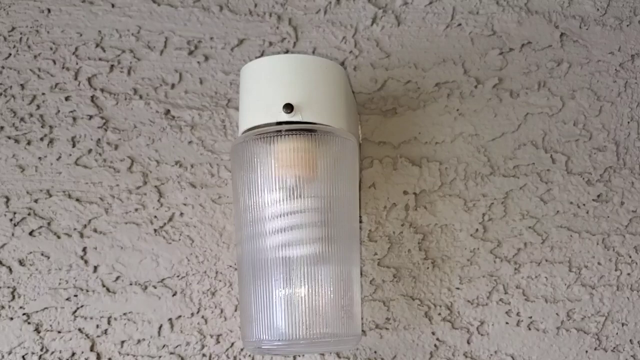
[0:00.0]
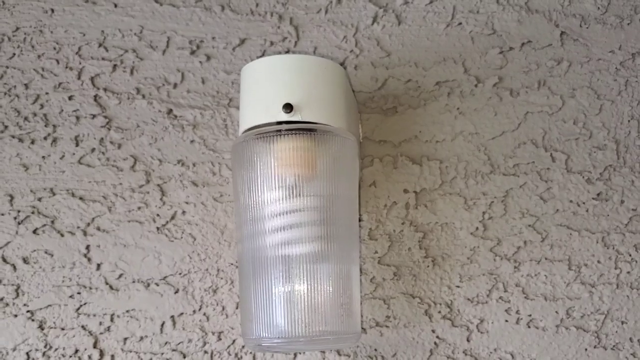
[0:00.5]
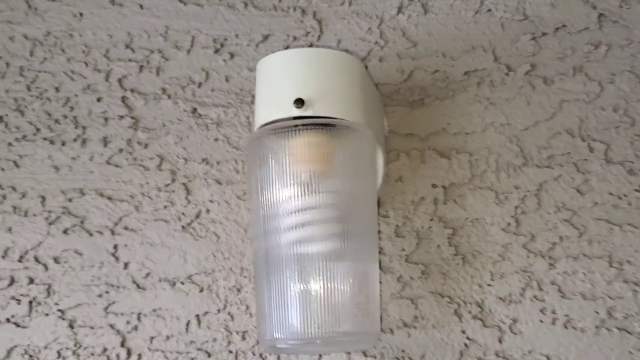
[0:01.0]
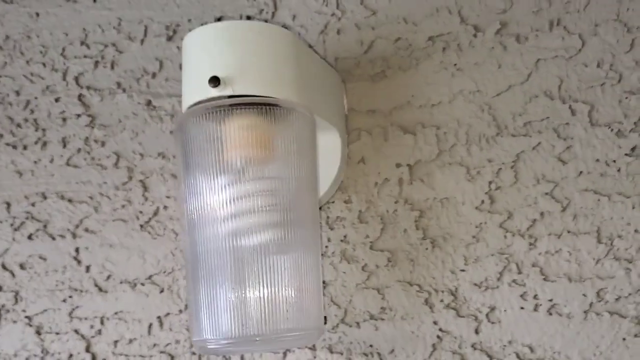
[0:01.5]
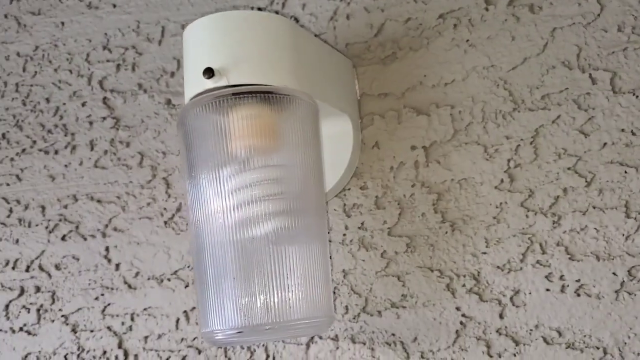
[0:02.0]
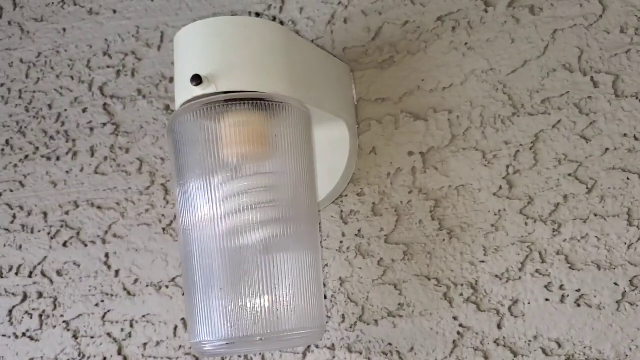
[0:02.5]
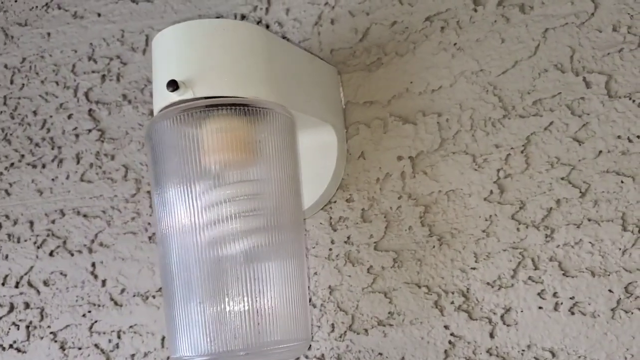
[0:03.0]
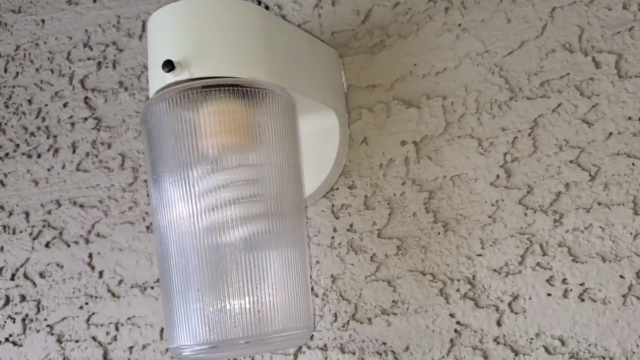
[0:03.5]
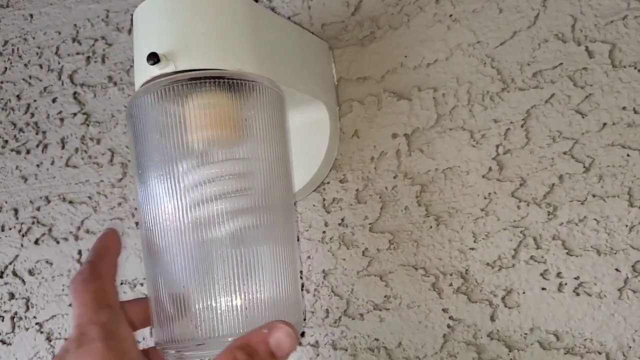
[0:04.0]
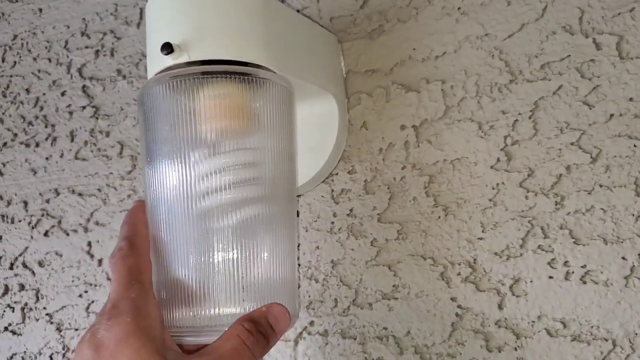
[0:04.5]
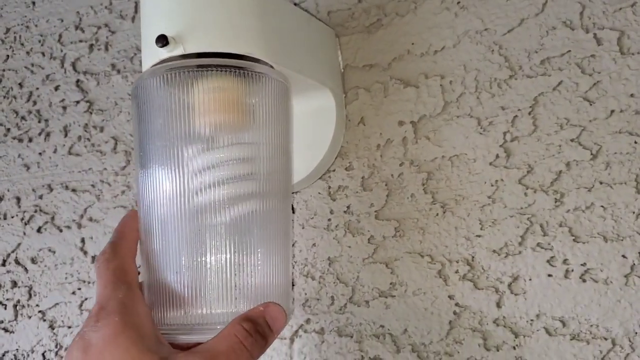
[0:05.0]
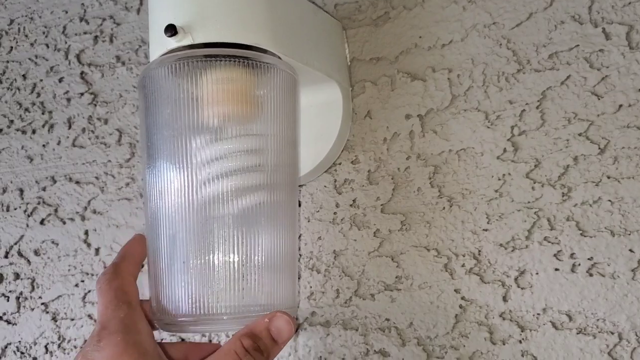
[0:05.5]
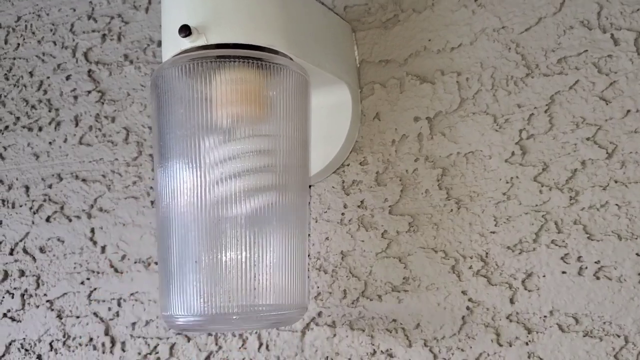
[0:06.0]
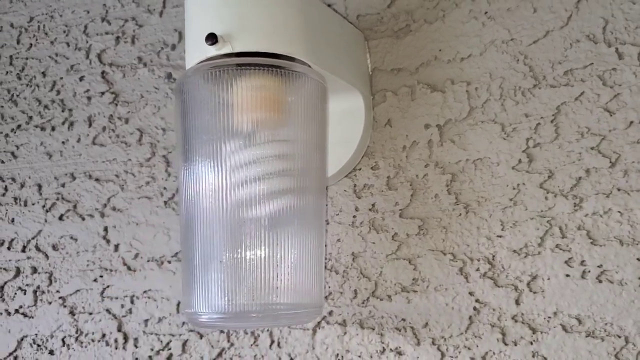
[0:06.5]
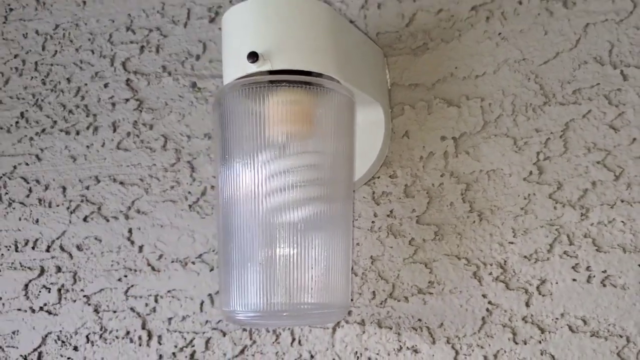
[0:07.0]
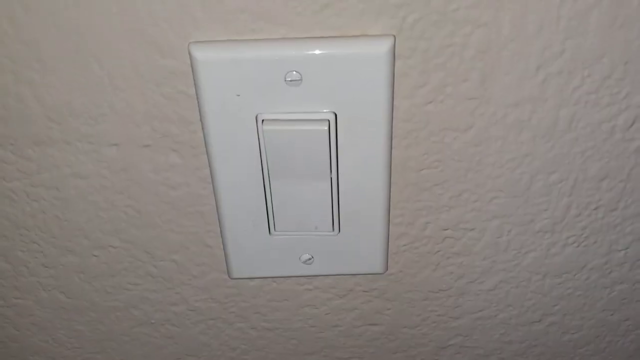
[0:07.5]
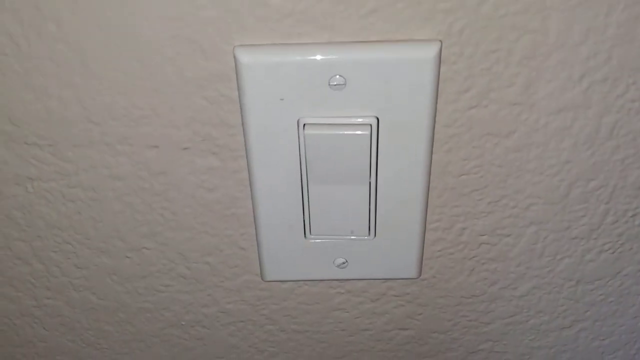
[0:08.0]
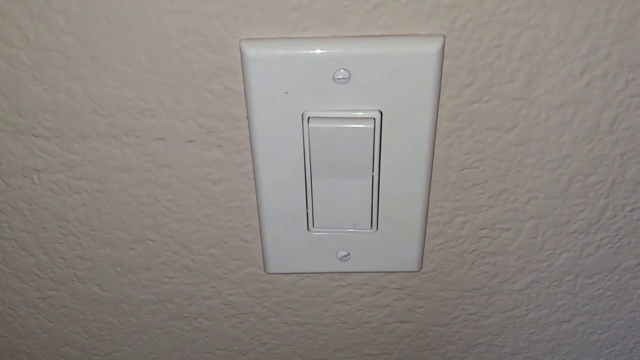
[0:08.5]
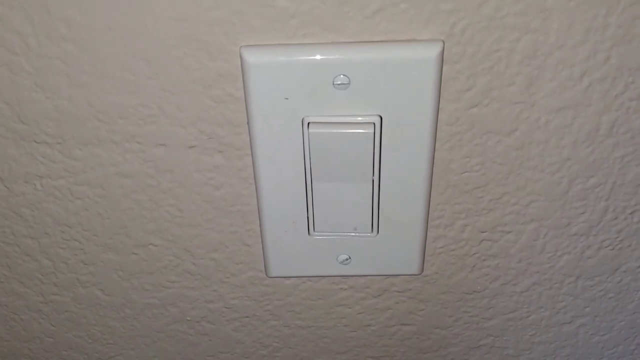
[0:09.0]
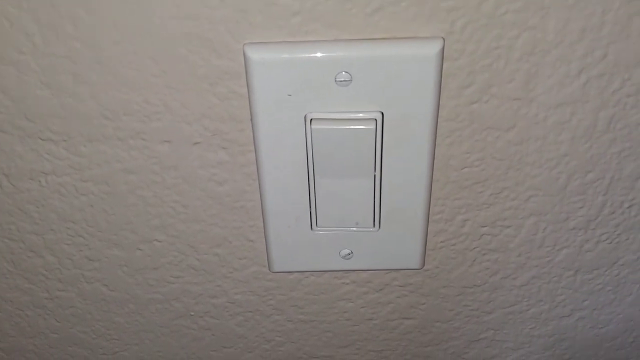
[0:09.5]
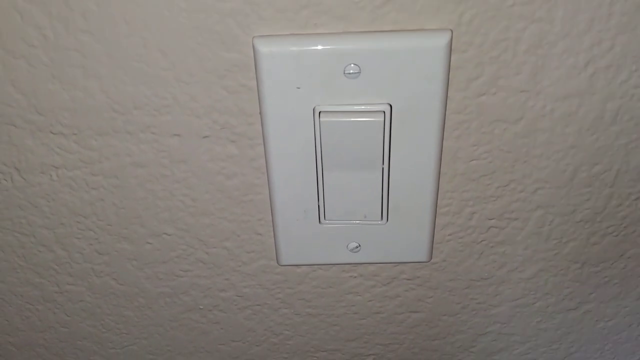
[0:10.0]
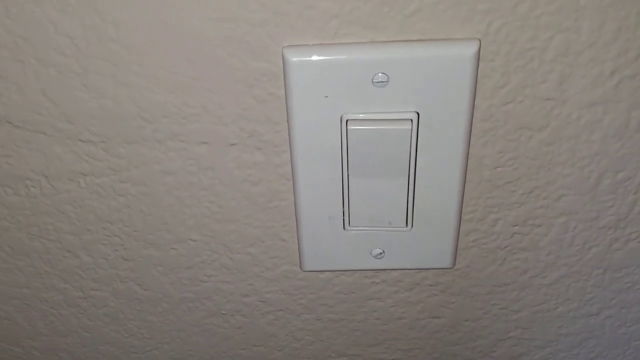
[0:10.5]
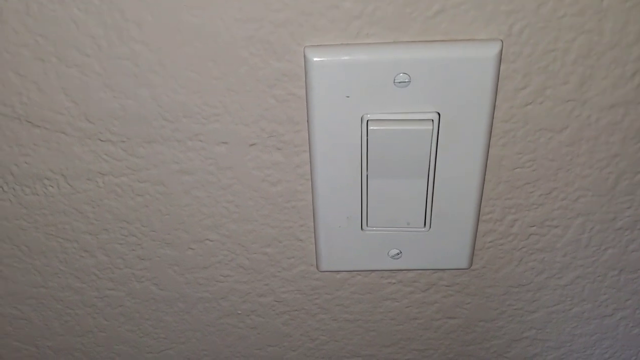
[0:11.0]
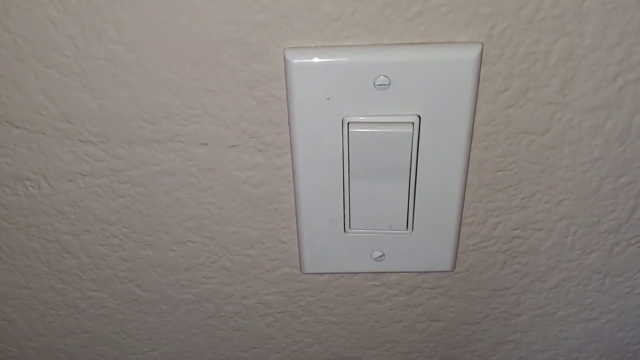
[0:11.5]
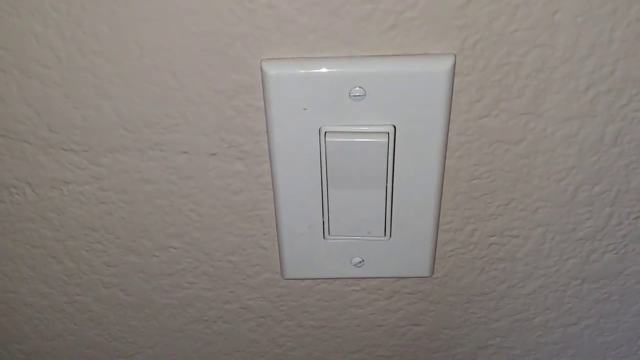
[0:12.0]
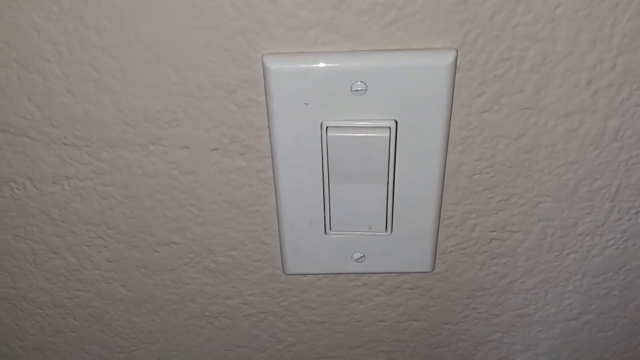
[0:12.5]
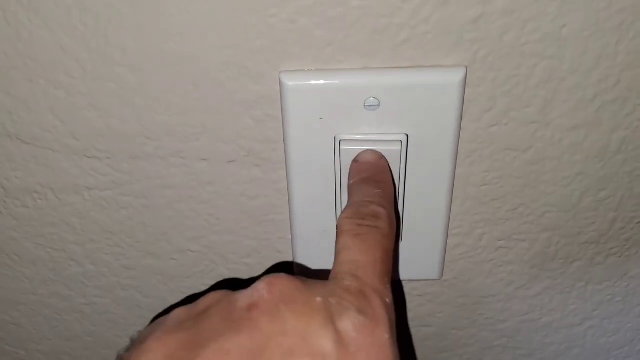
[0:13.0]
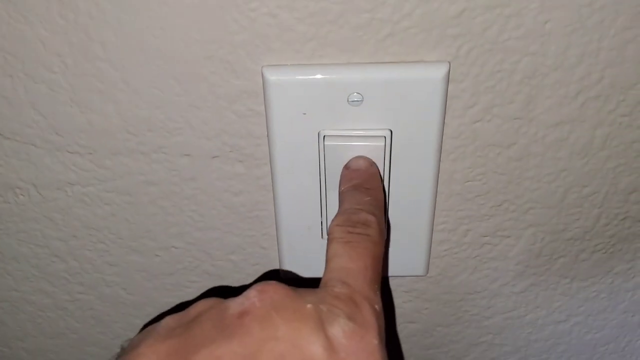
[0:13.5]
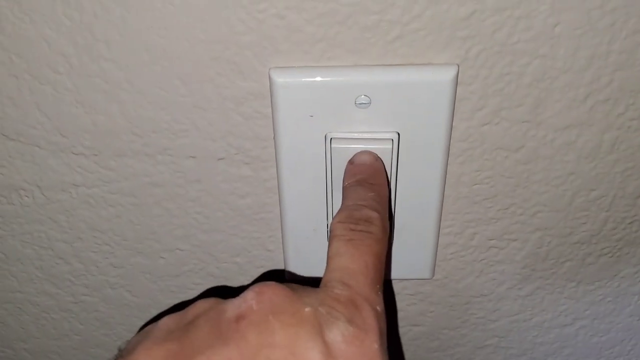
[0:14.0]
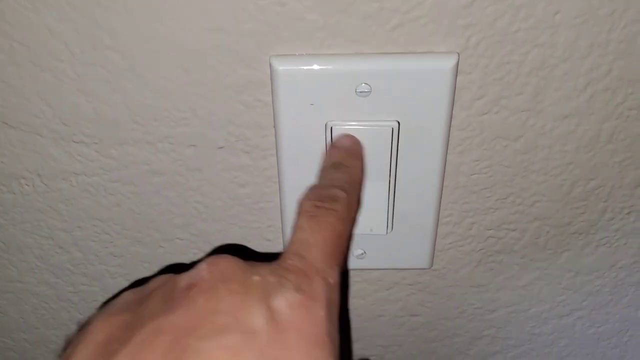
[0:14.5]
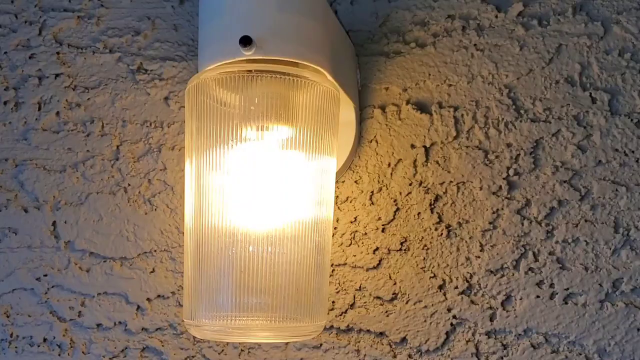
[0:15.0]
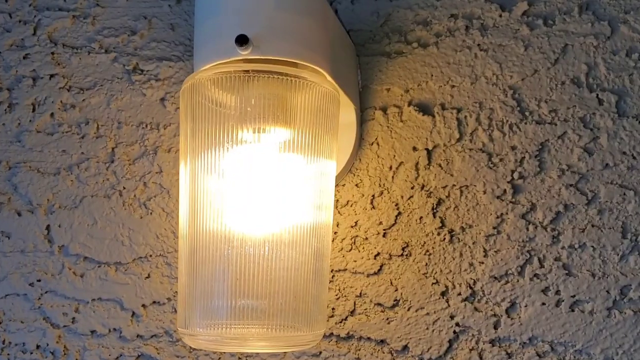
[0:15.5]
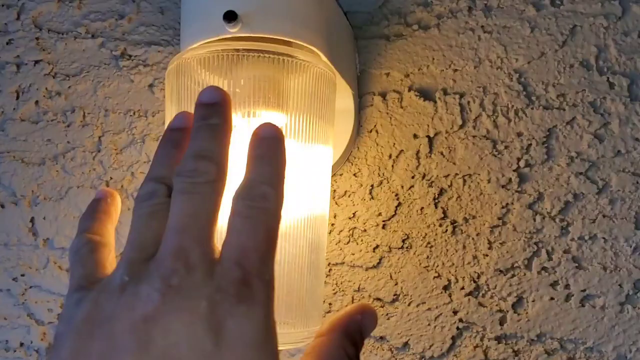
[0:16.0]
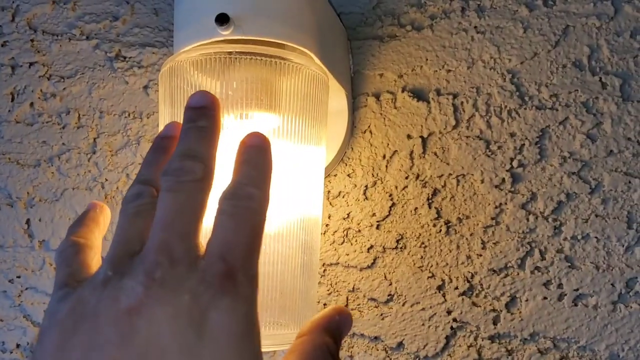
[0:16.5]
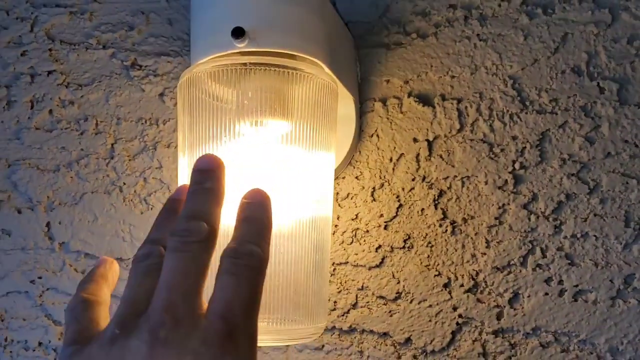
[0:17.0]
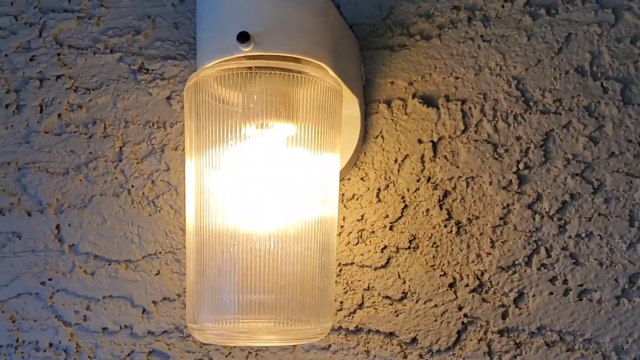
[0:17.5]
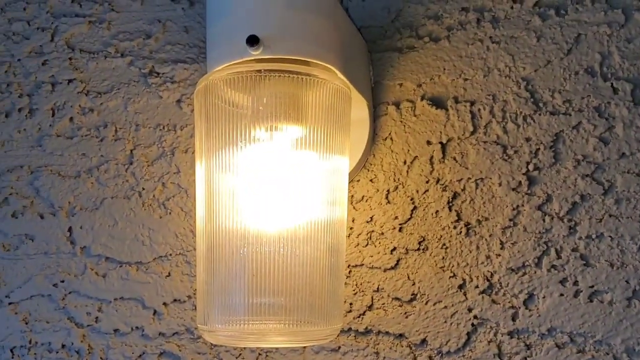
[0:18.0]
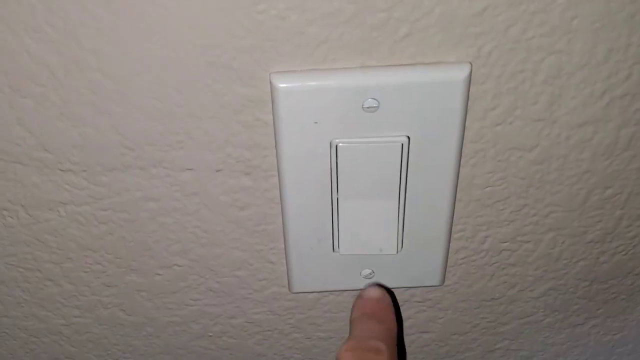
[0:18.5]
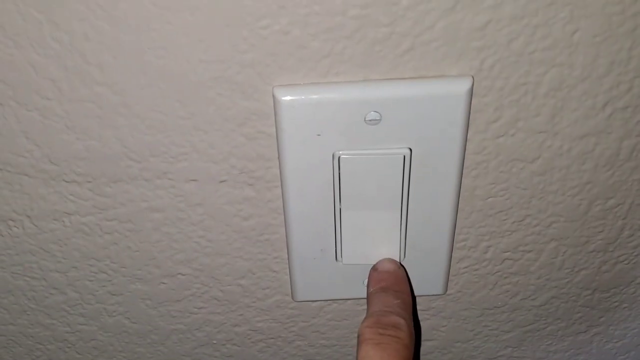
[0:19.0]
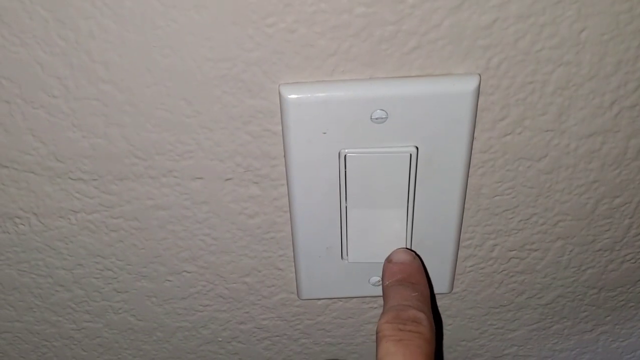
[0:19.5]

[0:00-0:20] A light is shown, and a man holds it, straightening it. He then heads toward the switch and presses it, and the light turns on. He presses it again and the light goes out. The light appears to be damaged, and the bulb is visible outside in its case.